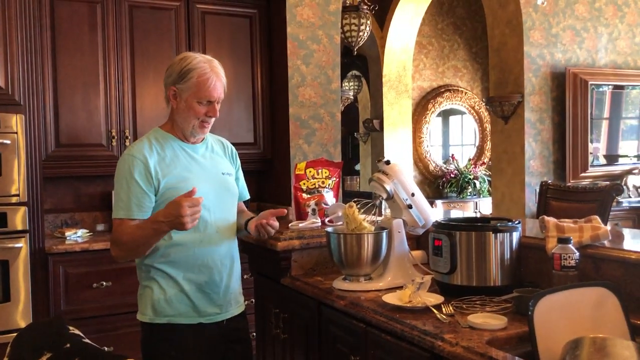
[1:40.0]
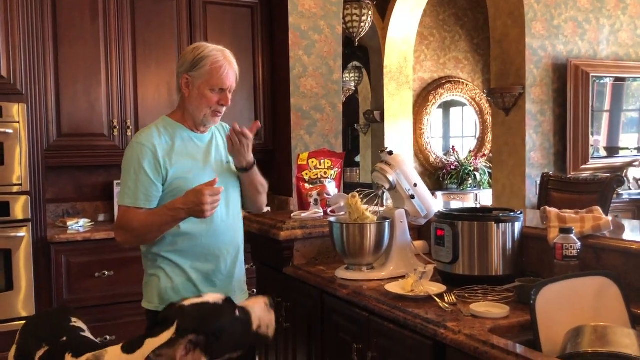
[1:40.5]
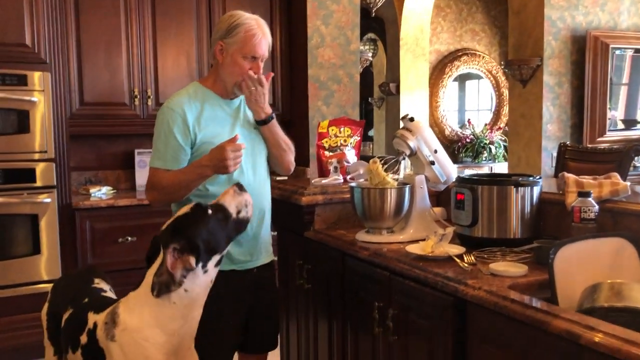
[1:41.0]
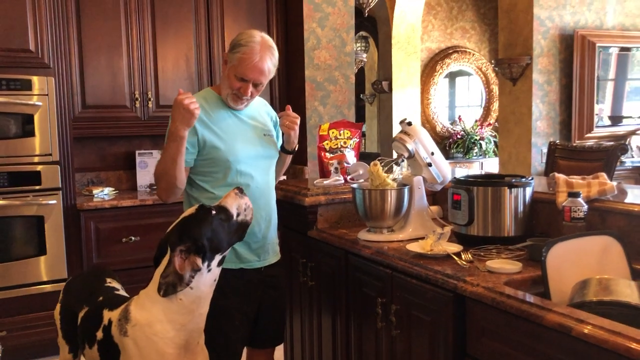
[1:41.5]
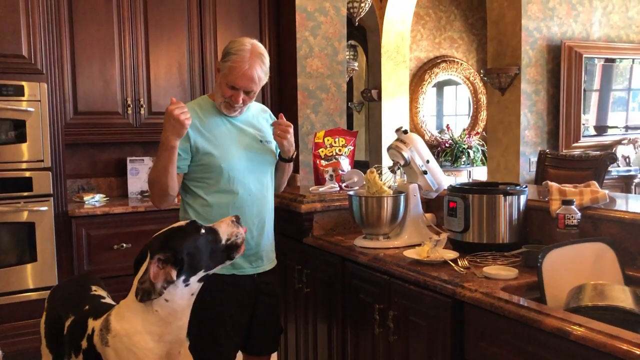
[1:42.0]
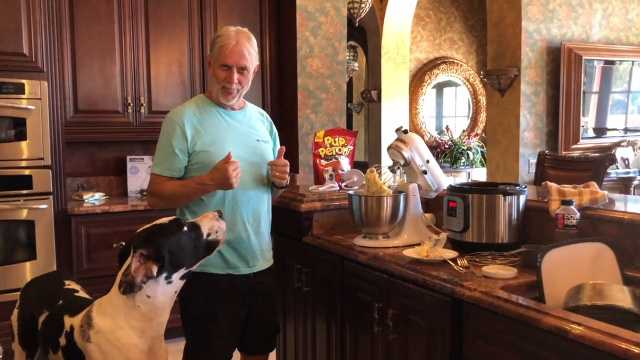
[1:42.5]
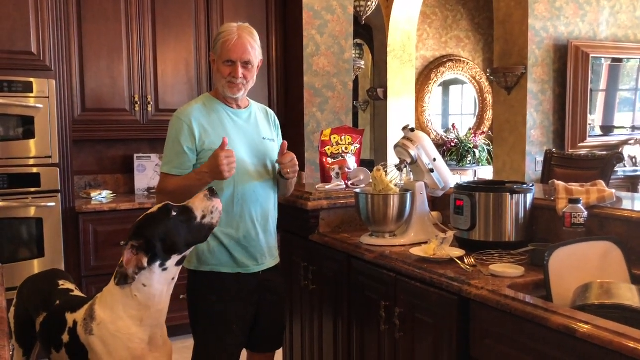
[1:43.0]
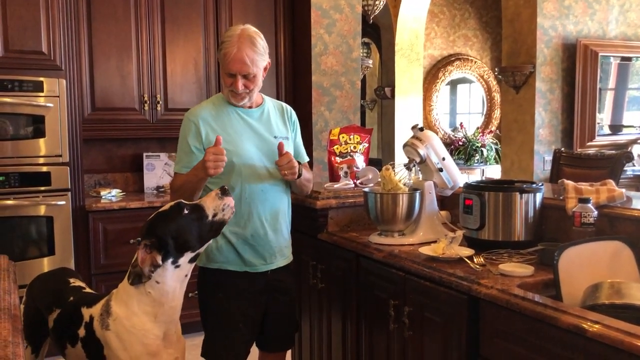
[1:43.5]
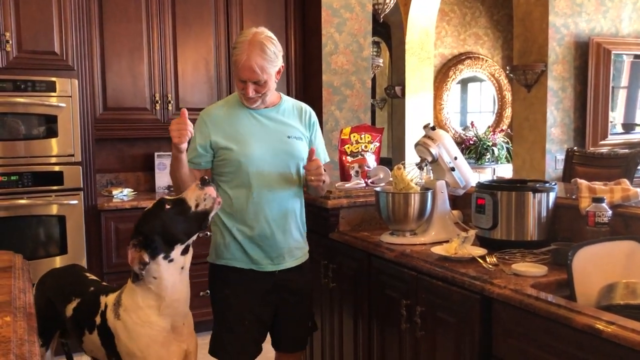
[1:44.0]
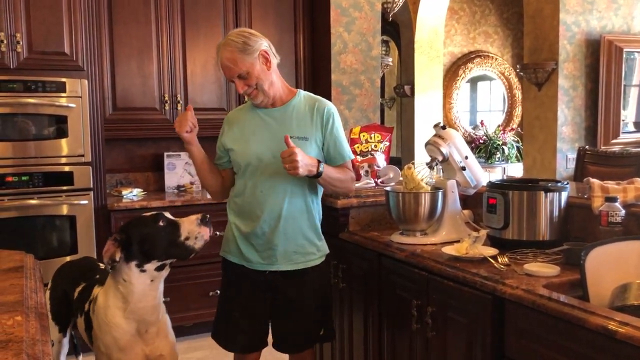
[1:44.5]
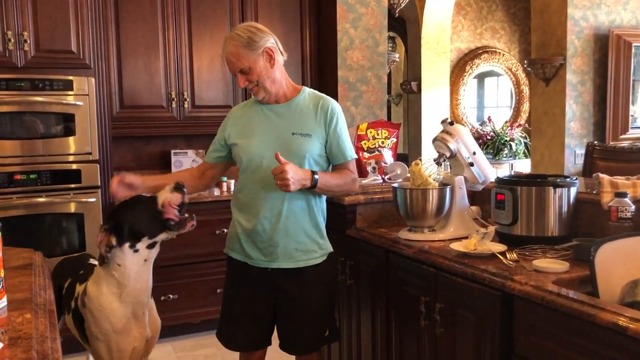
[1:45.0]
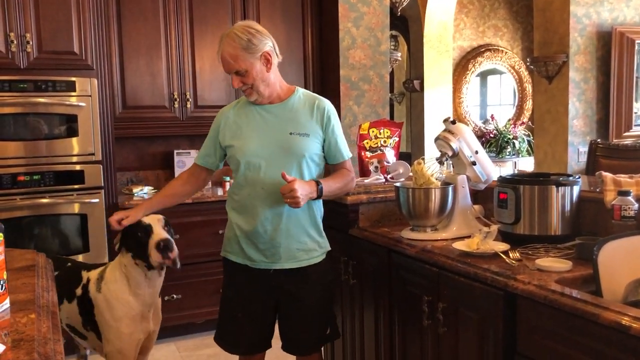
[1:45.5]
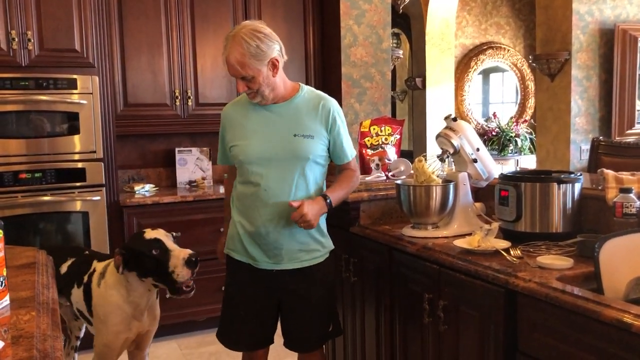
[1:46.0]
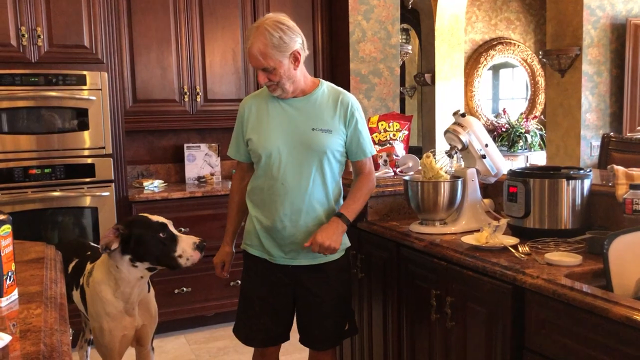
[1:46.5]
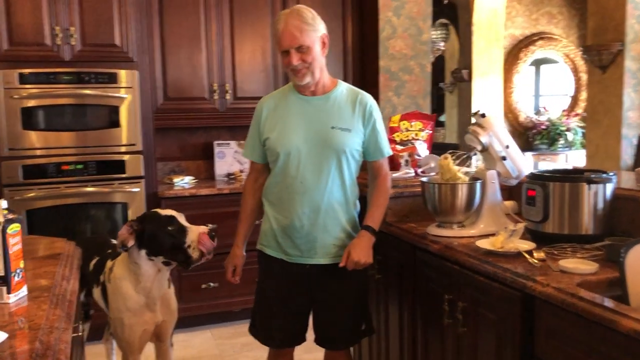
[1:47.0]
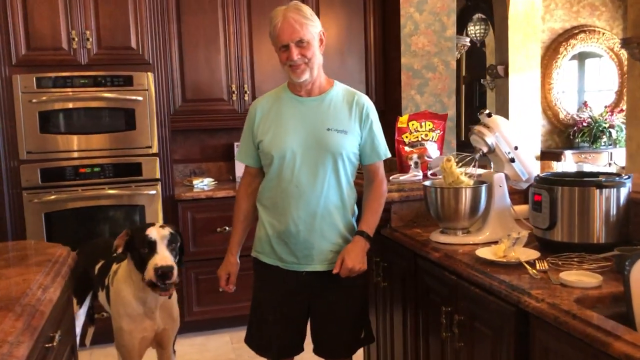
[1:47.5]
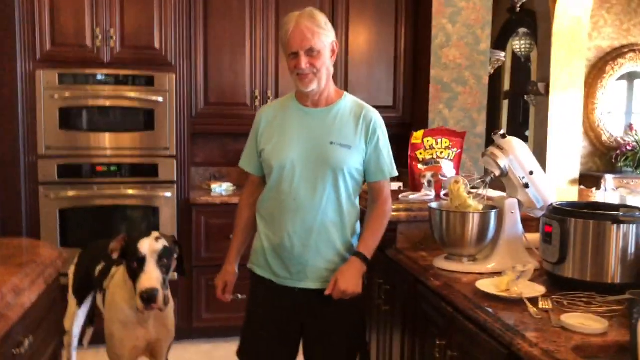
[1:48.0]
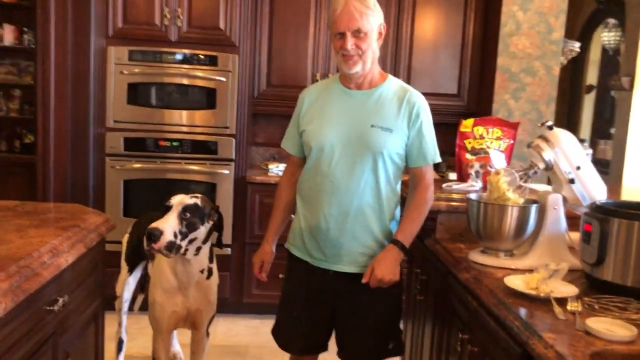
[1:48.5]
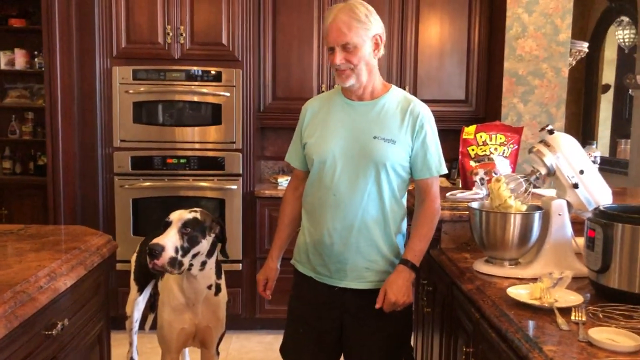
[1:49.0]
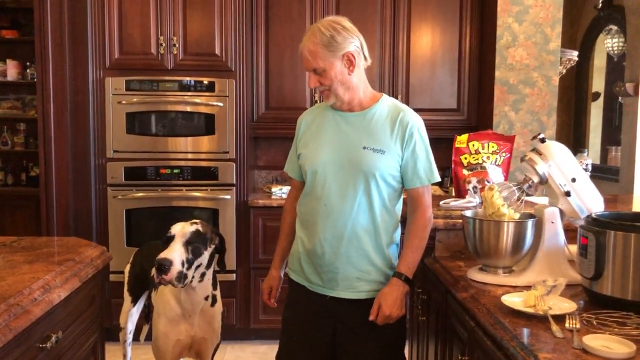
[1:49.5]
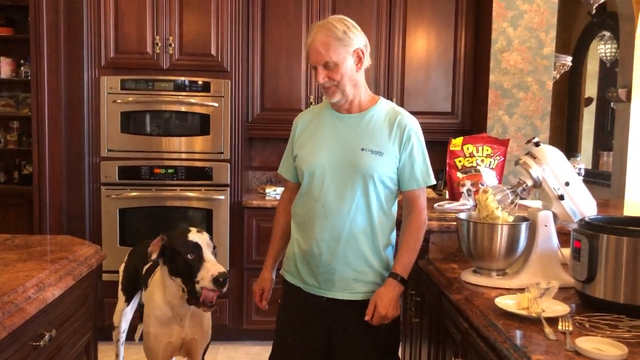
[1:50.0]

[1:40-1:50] The two ovens are now seen more clearly; they are not glass ovens but look like stainless steel ovens with glass windows for seeing inside. The Caucasian man, who has thin hair and wears a light blue shirt and black shorts, tastes the mashed potato and smiles. He takes some of the mashed potato, dips it in the butter and feeds it to the dog, which enjoys it and looks up at him for more. The man then looks straight at the camera and gives two thumbs up. Everything in the kitchen stays in place. More of the kitchen is visible, including another island next to the dog. Behind the man are brown cupboards, and to his far right (the viewer's far left) a pantry is briefly visible for two or three seconds, holding items such as spices.